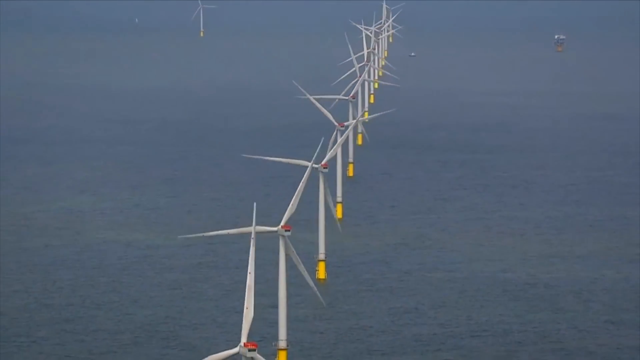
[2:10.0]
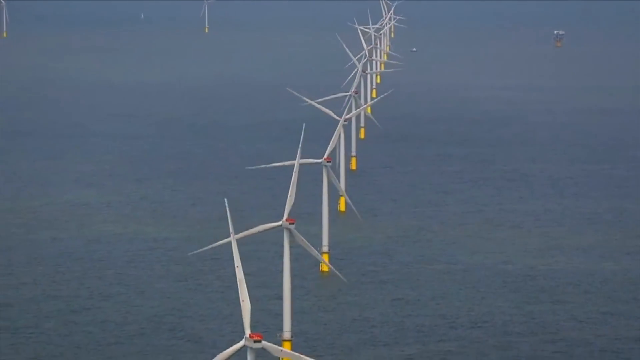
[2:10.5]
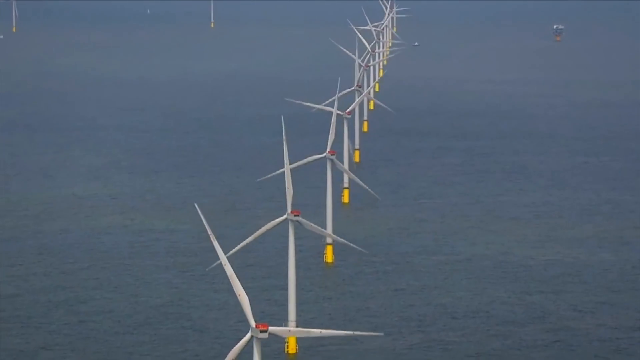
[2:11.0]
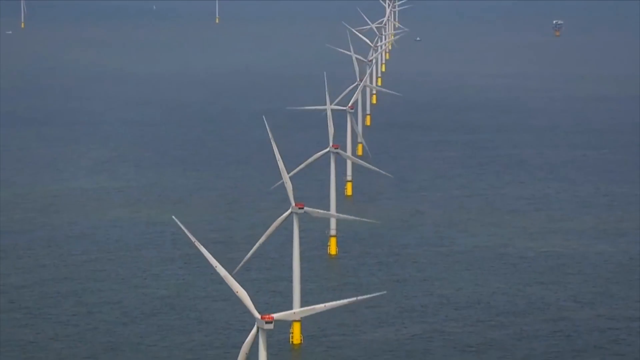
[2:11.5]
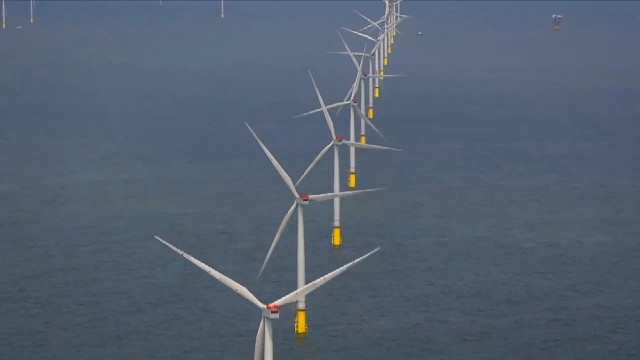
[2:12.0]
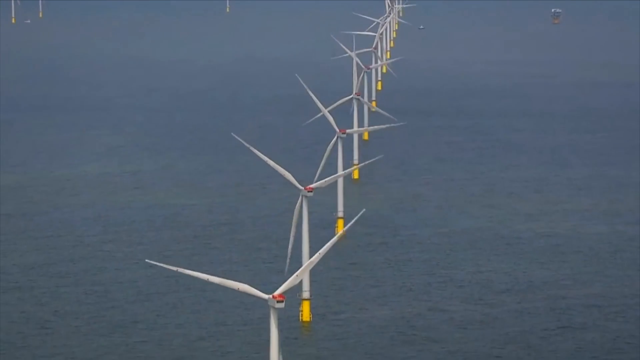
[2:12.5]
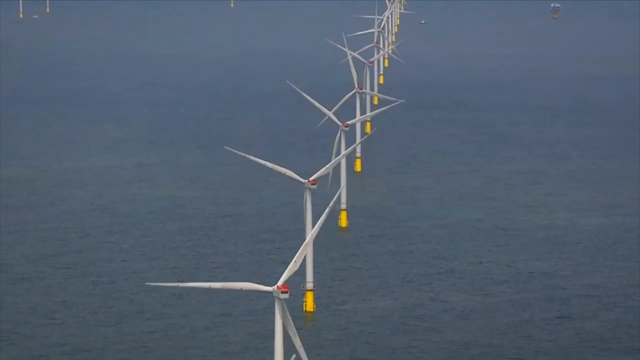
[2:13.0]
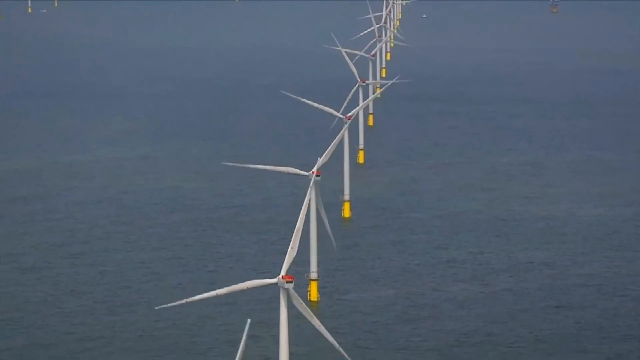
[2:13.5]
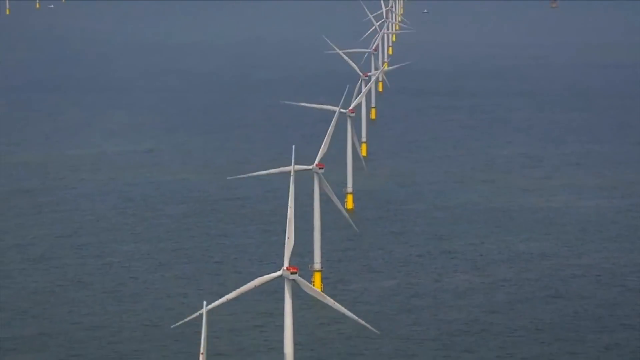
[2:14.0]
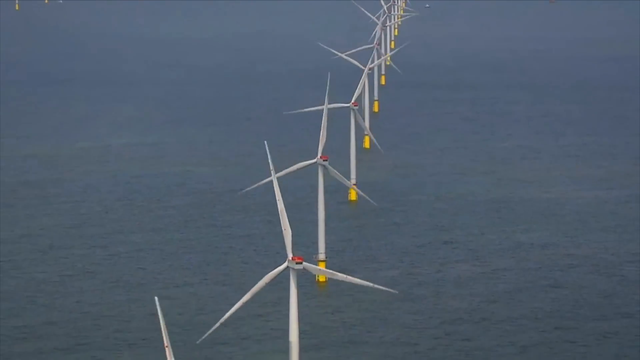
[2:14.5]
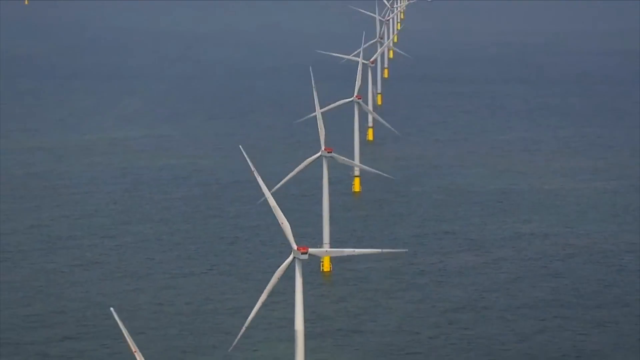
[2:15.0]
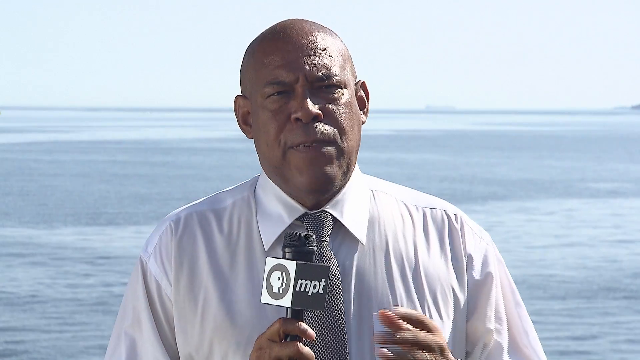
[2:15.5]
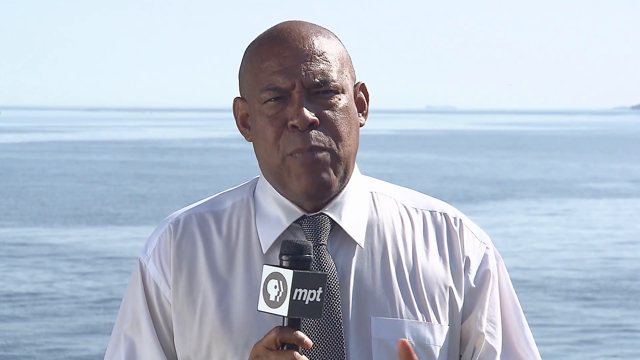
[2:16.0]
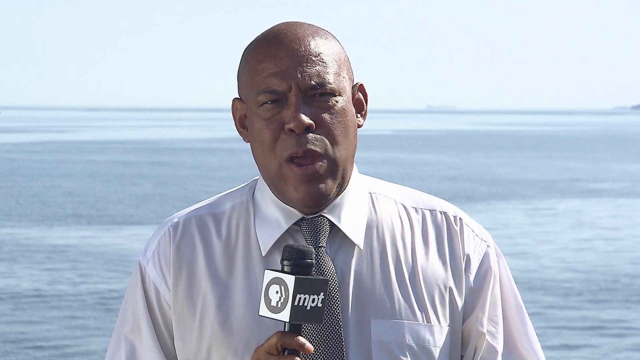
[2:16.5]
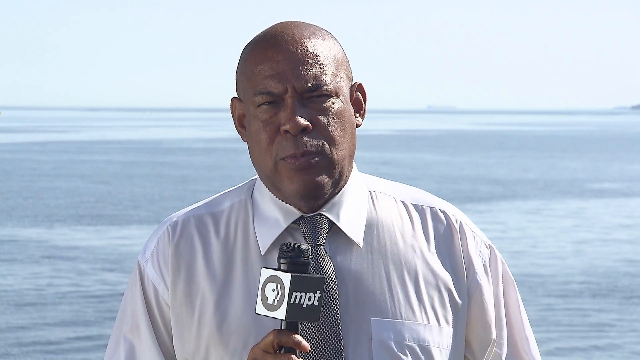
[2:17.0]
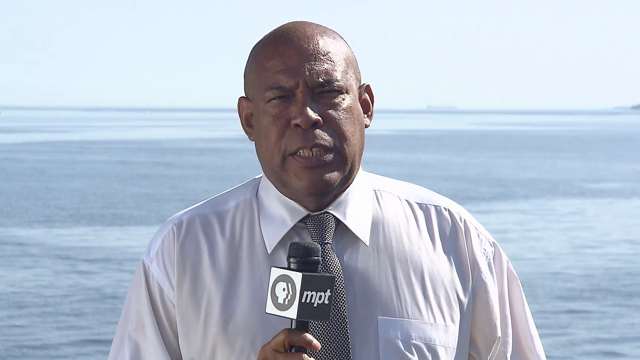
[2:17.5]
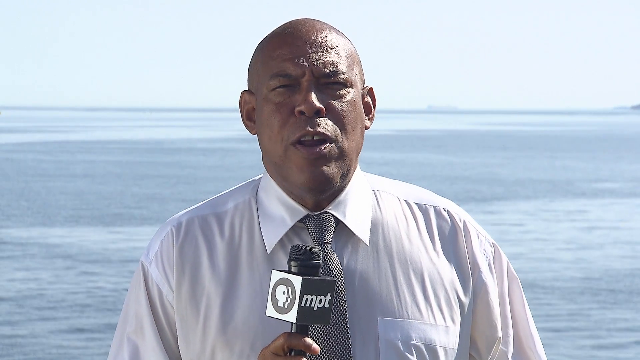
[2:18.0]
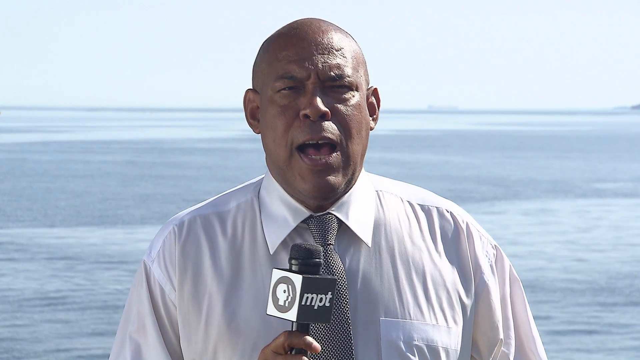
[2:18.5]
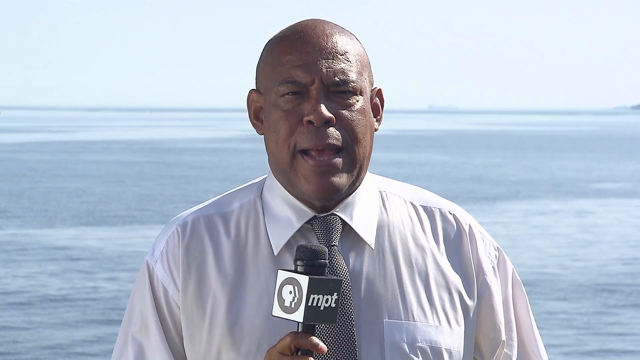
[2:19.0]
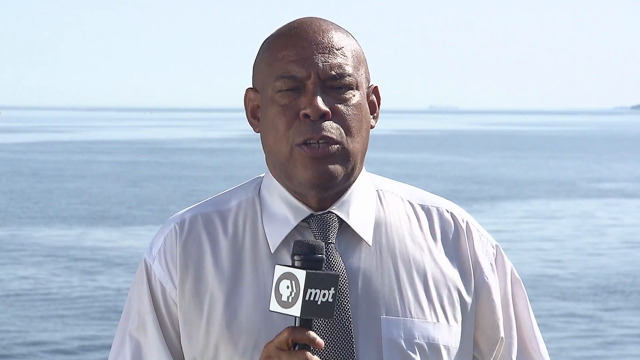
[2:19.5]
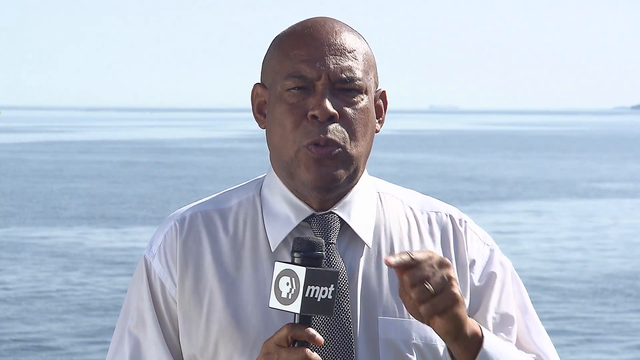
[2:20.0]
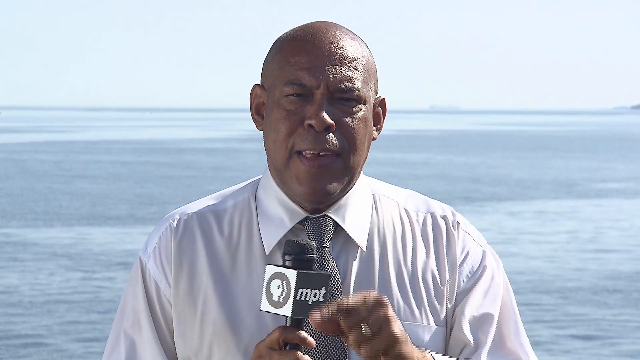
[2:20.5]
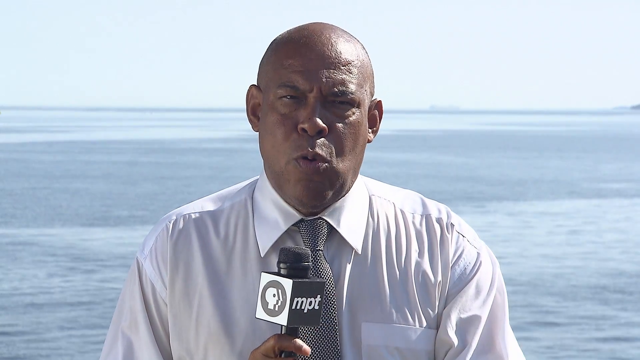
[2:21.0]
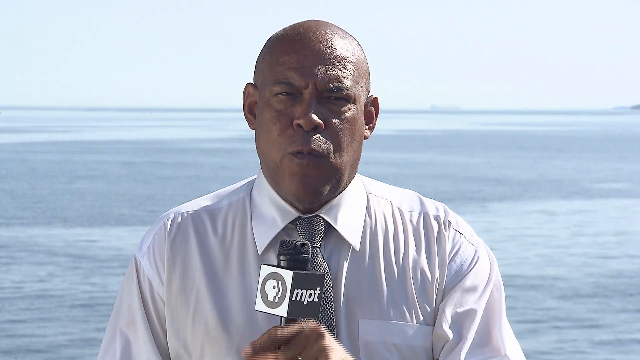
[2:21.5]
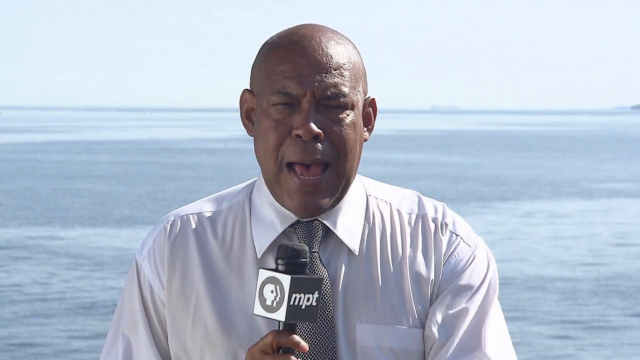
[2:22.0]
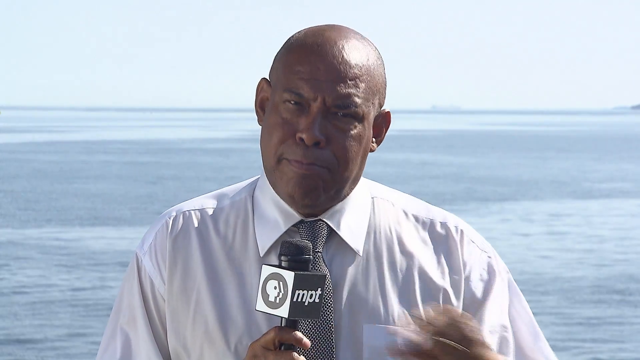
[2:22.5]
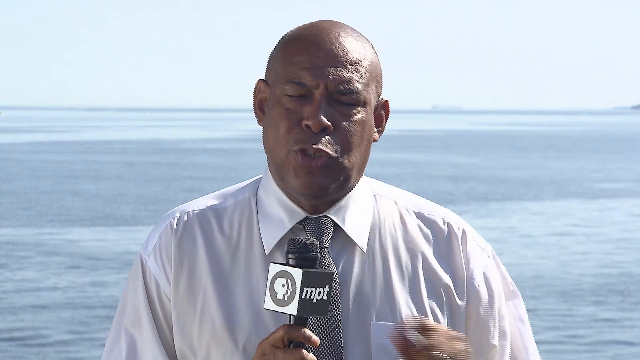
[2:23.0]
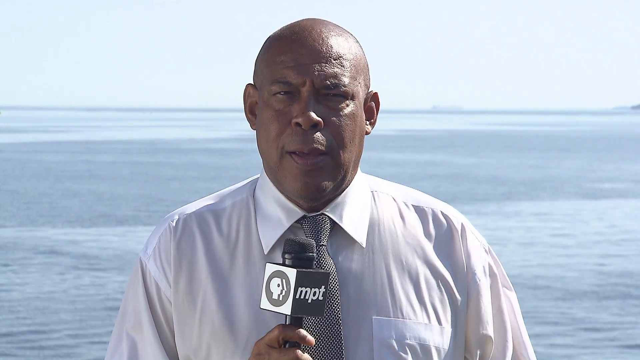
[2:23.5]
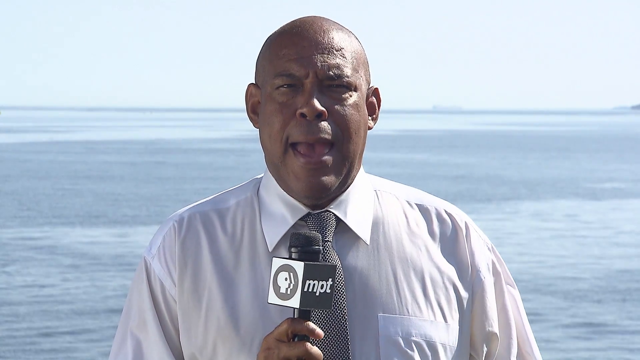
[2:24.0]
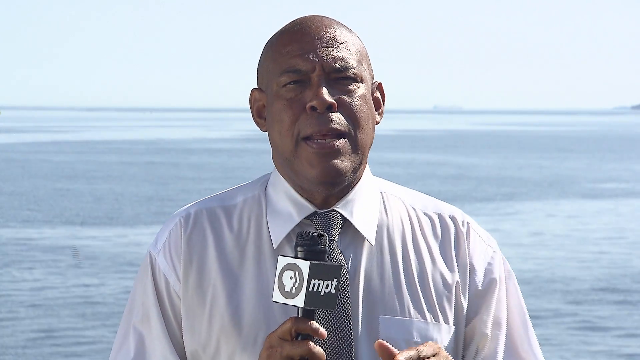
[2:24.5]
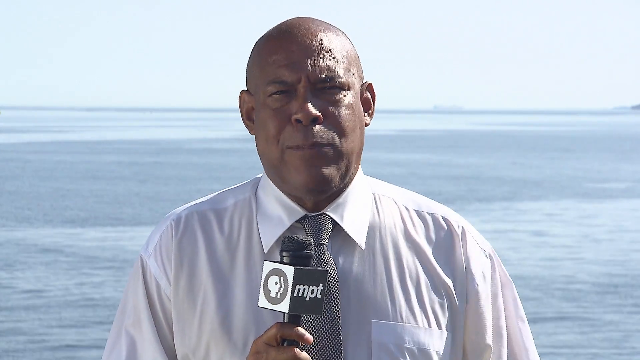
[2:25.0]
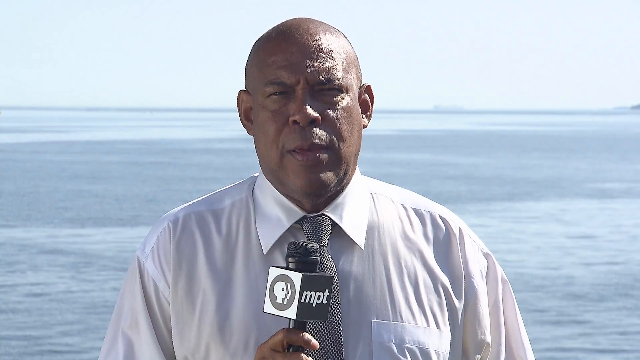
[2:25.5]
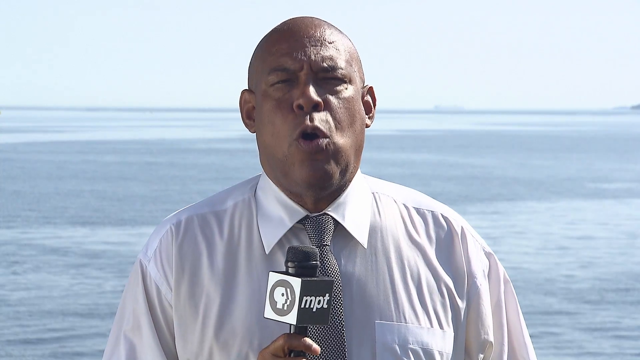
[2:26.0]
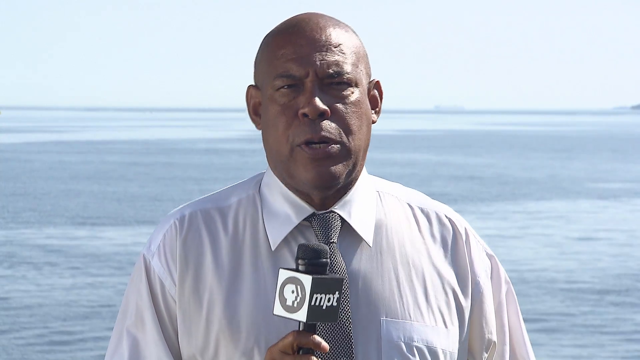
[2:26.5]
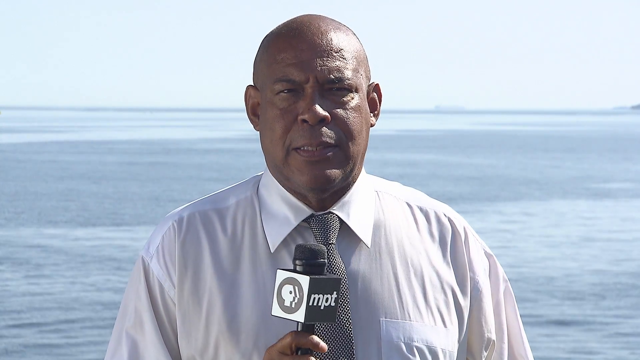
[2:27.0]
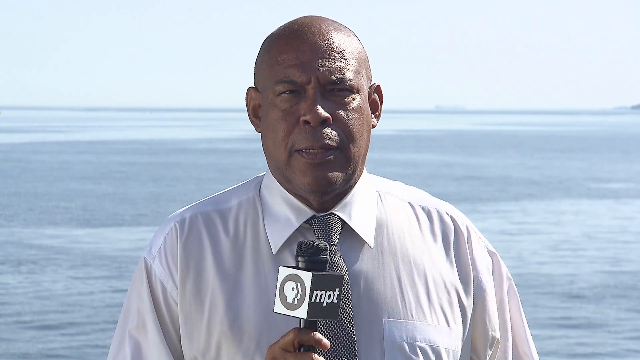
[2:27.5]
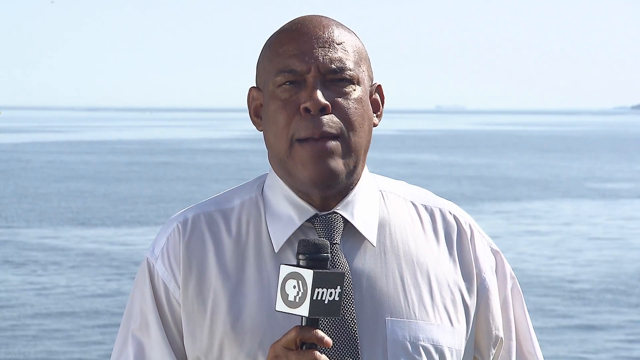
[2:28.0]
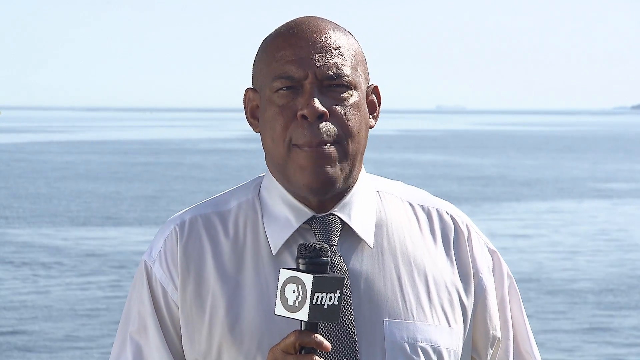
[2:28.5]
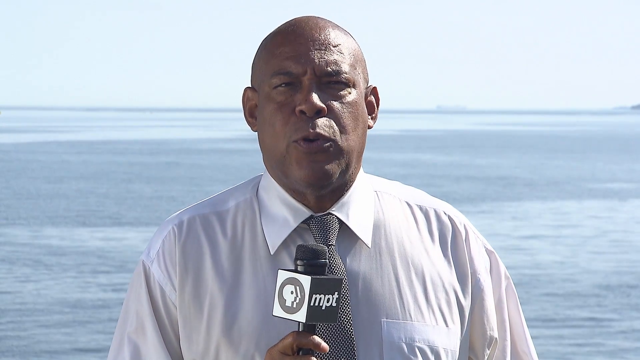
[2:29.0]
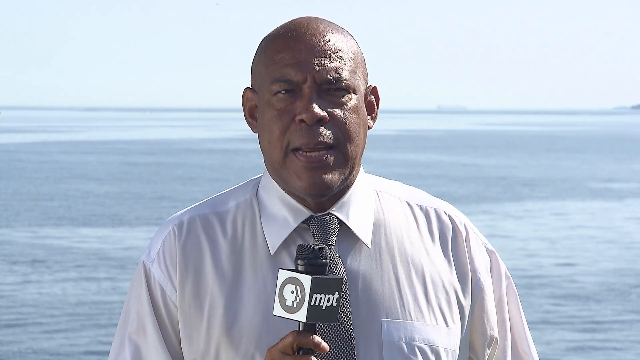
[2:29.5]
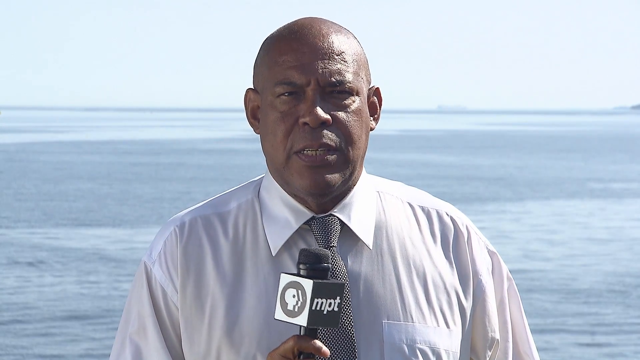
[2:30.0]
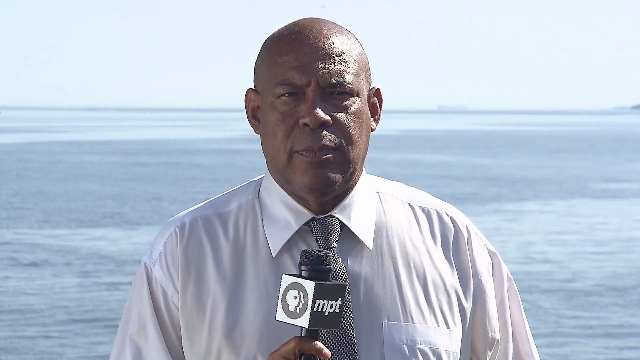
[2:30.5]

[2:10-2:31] A line of wind turbines in a farm out at sea is shown. They have grey bodies and grey blades, yellow bases, and seem to have orange boxes at the back of the centre where the blades meet. They are all rotating. The footage slowly pans away to a Black reporter wearing a white shirt and a tie with a very fine diagonal black and white pattern. He holds a microphone with a cube around its head; the cube reads "MPT" on its right-hand side and has a small picture of several heads on its left-hand side. He stands with the sea behind him, talking to the camera and occasionally gesturing with his hand as he speaks, holding the microphone.